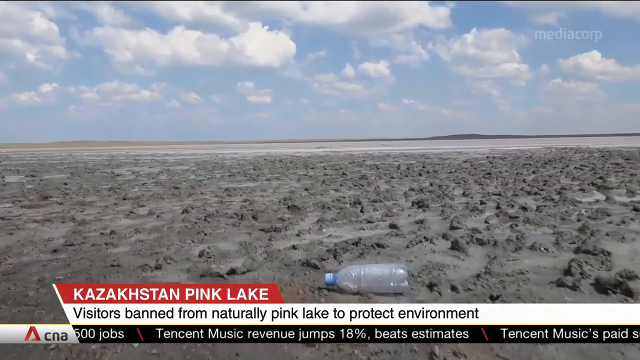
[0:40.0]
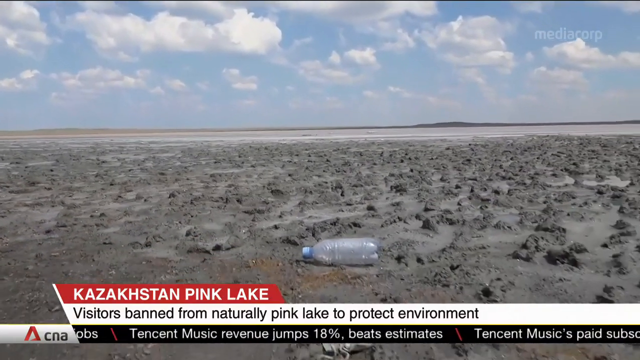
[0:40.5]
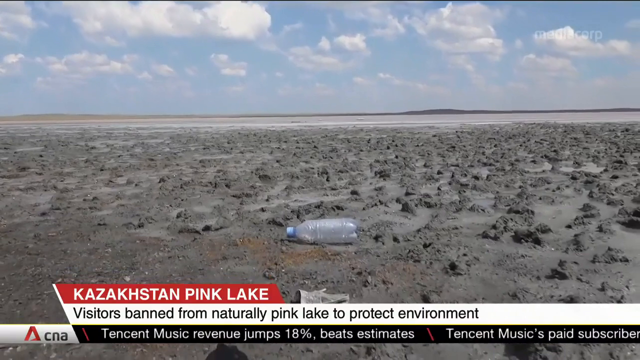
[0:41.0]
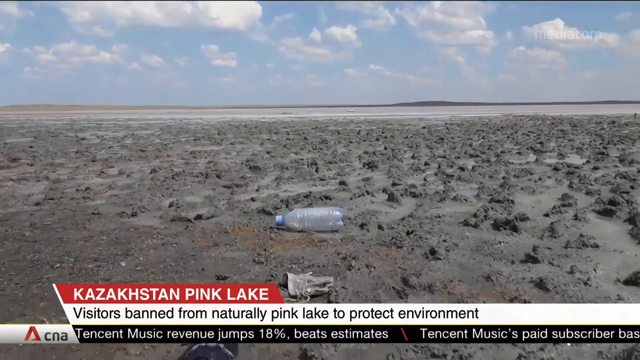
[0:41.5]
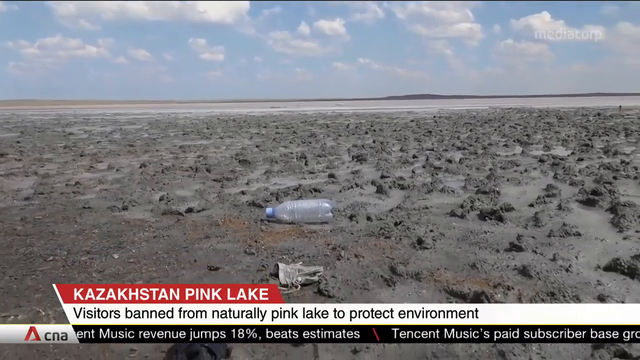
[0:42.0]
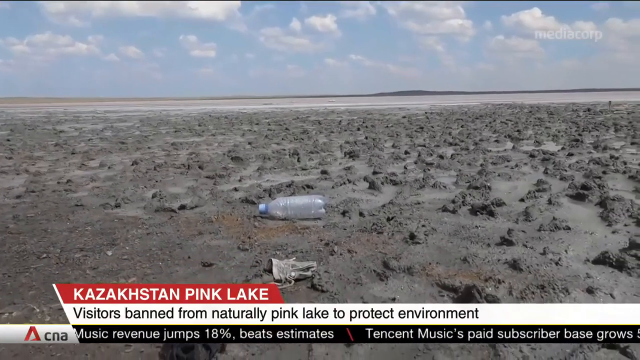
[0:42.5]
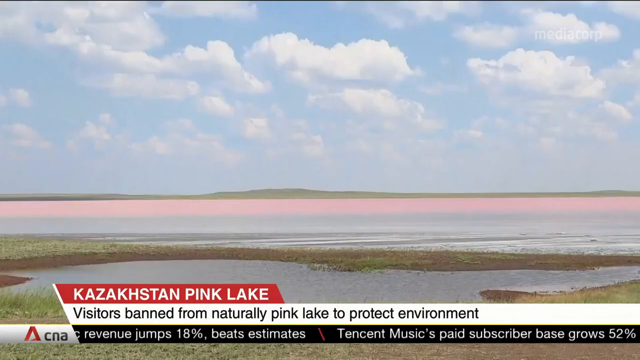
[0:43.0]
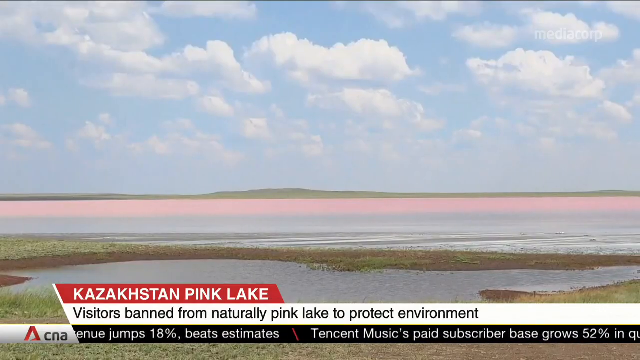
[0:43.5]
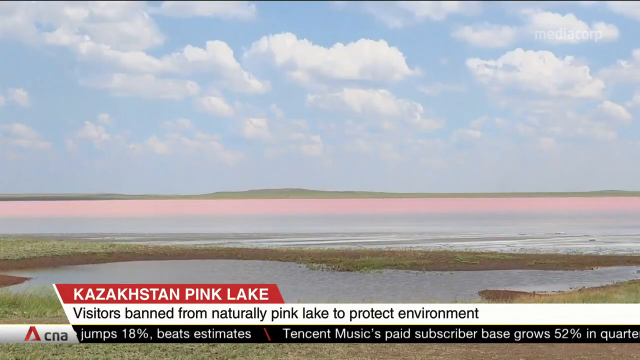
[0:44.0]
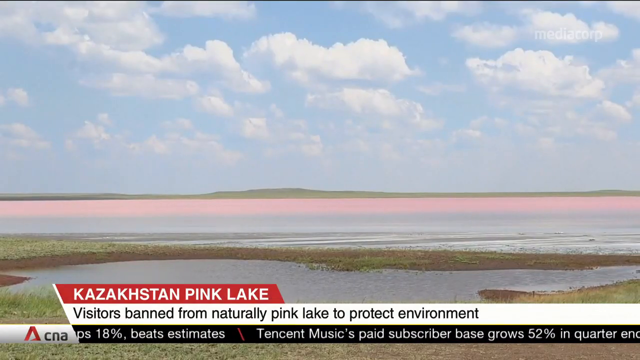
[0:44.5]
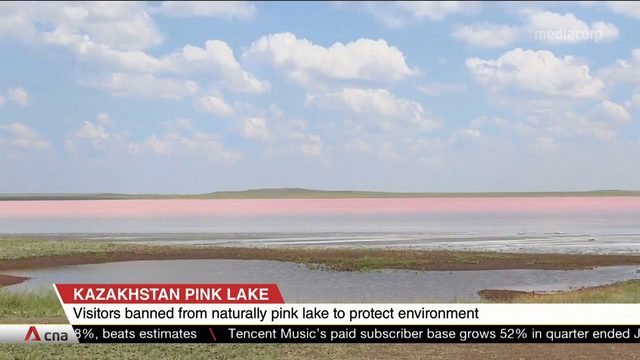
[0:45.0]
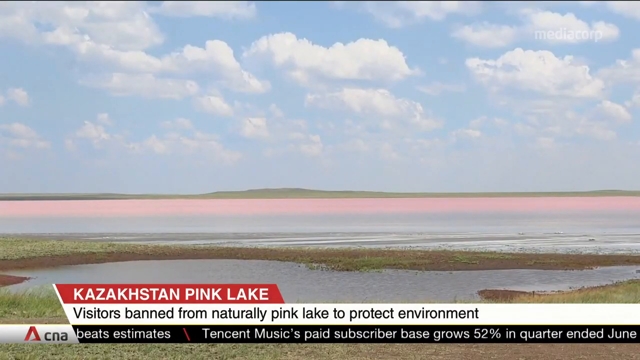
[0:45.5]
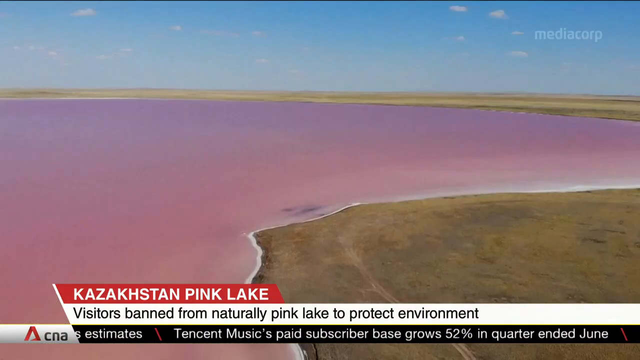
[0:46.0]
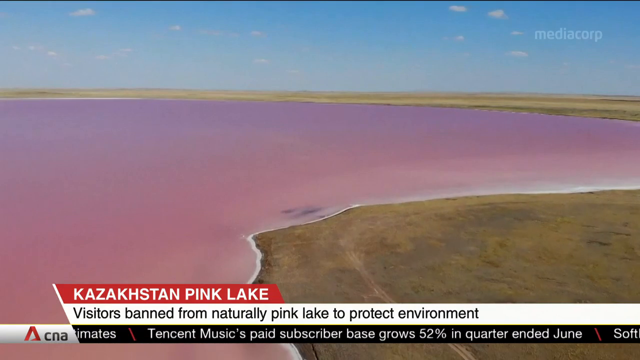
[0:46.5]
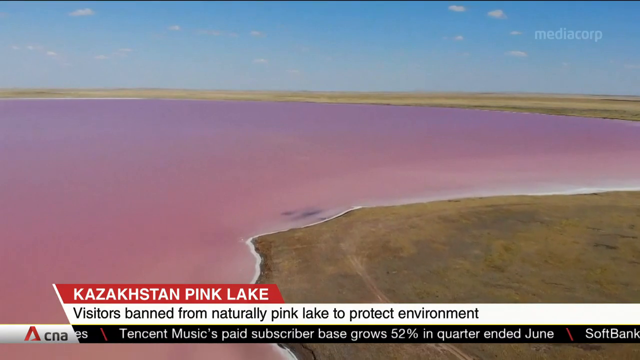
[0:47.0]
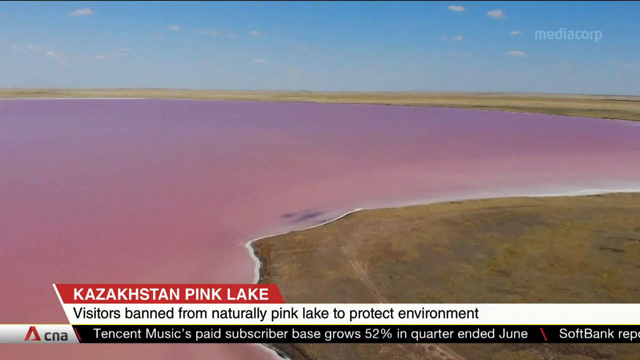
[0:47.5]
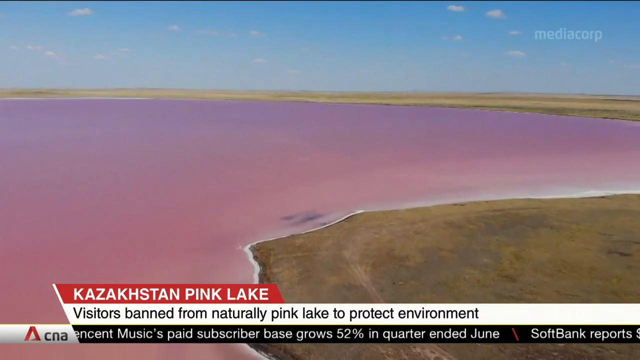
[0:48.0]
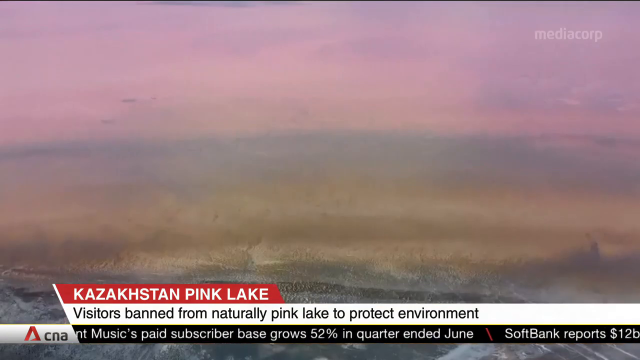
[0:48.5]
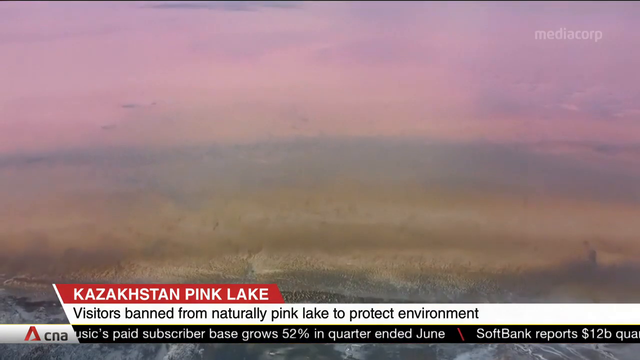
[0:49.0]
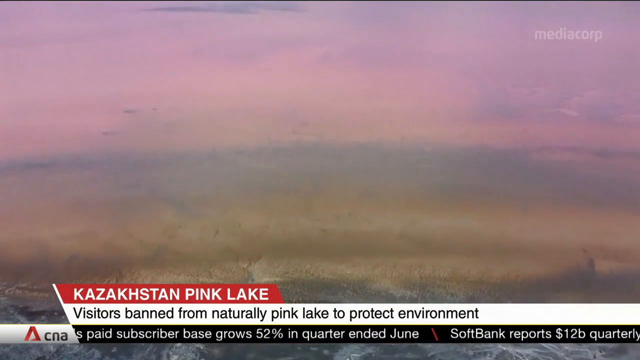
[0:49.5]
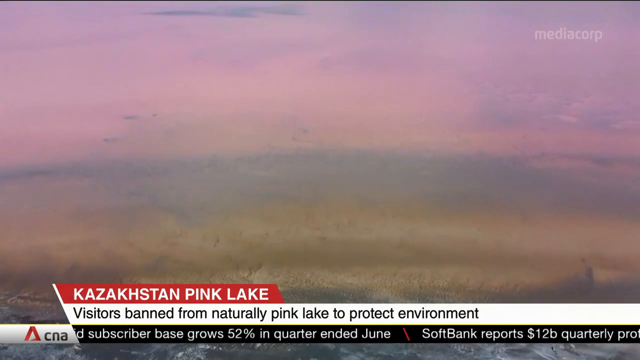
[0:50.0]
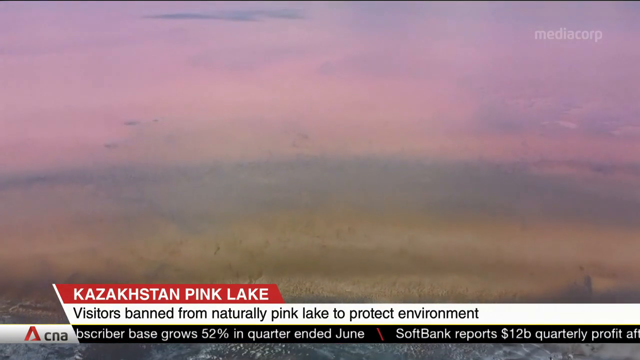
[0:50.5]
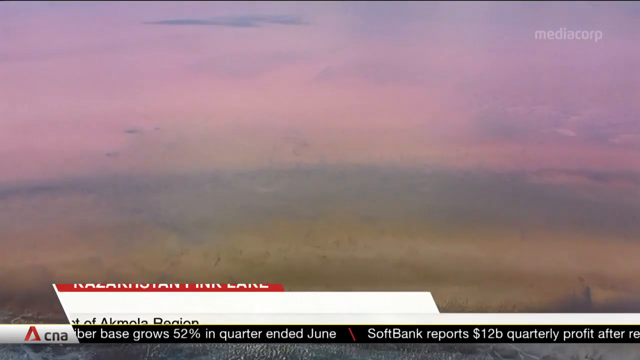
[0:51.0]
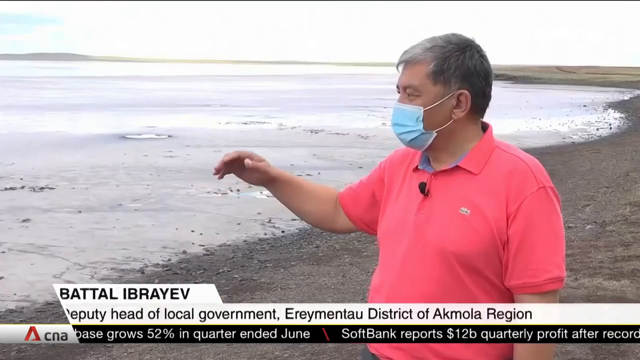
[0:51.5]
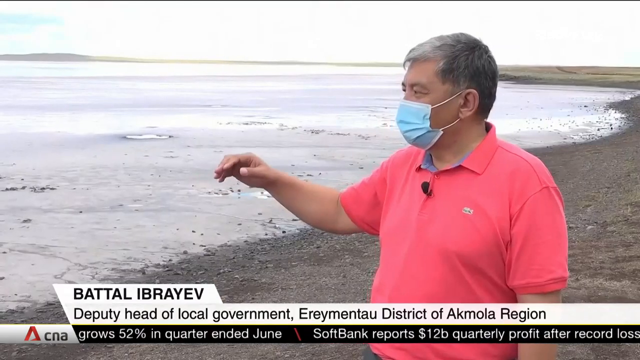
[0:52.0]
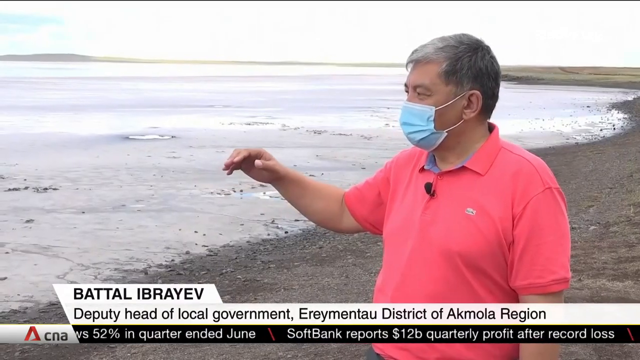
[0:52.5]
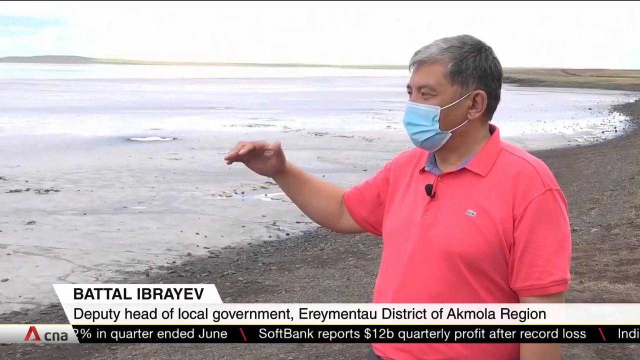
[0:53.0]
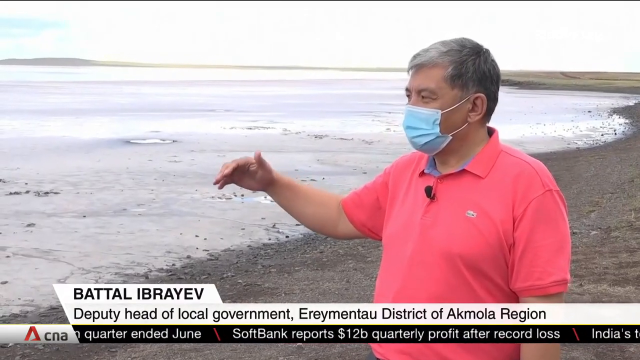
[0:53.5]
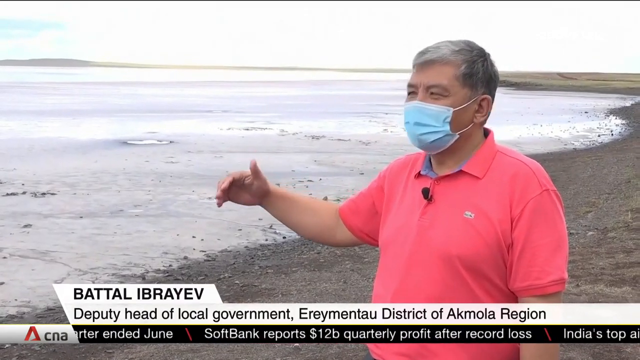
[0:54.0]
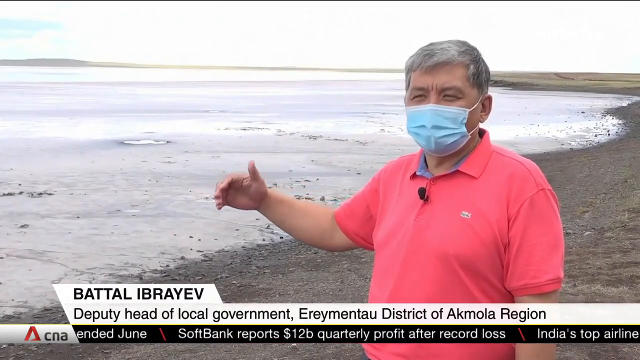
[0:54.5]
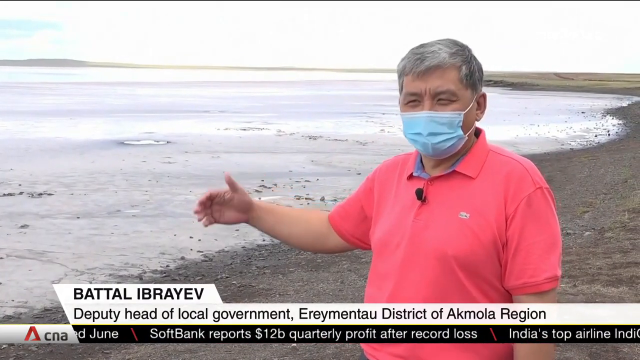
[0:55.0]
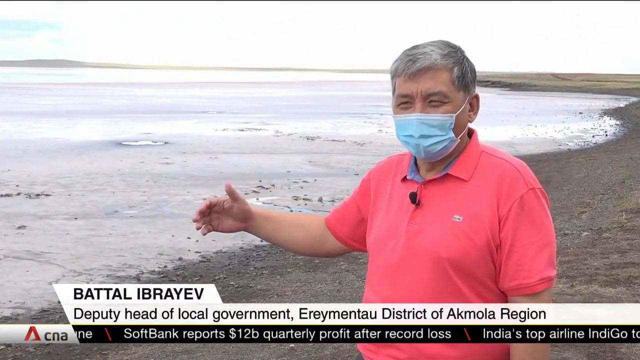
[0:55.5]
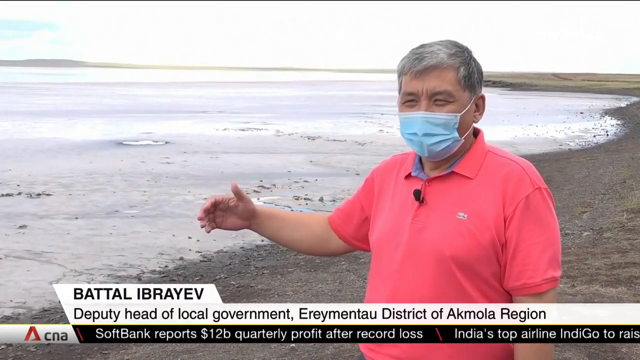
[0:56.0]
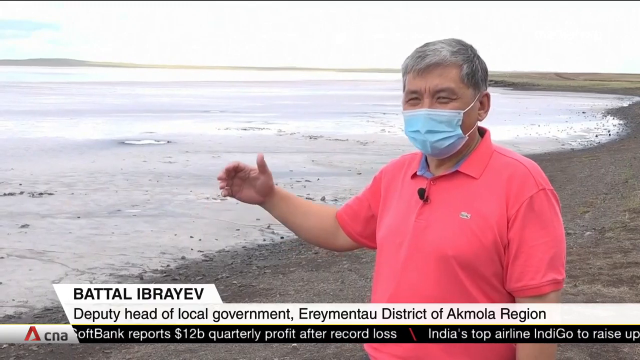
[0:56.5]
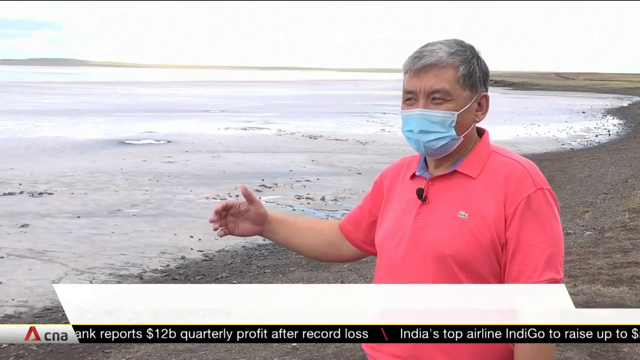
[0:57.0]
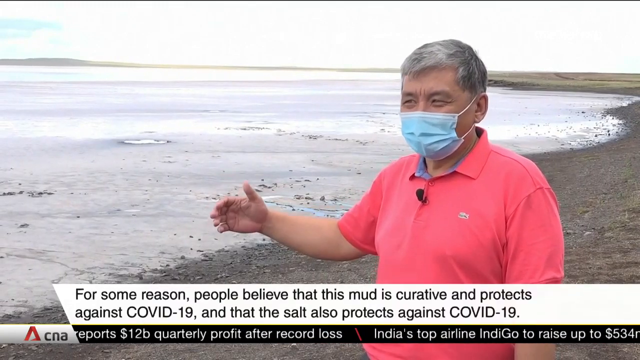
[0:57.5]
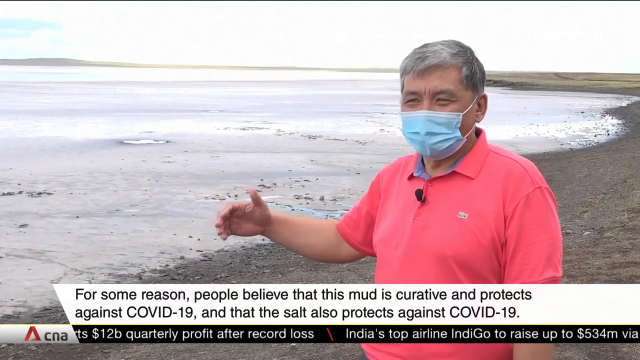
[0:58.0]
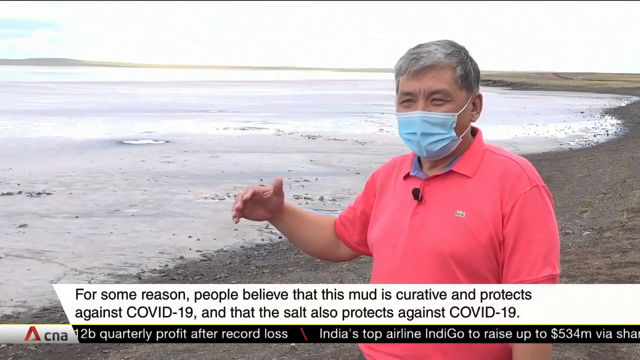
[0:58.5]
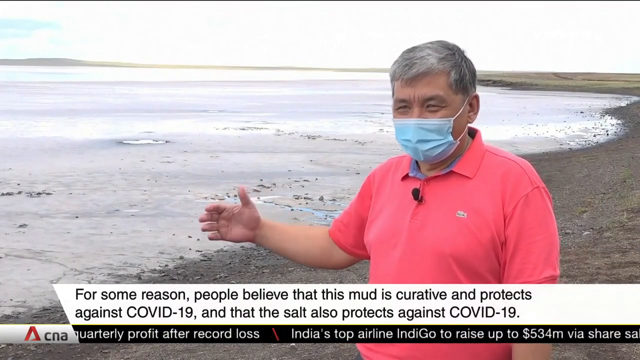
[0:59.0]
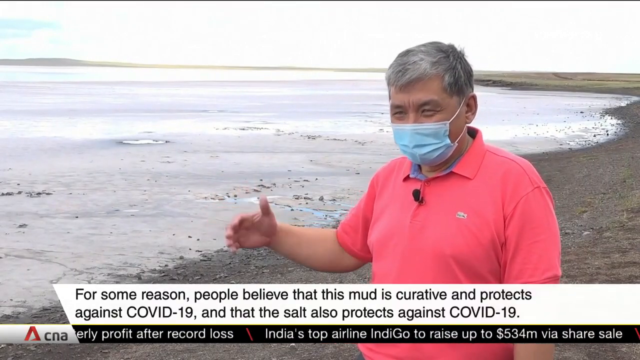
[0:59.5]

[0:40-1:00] An eye-level view shows the dried-up lake bed in part of the lake area, where a weathered plastic water bottle is laying on the dried riverbed; its cap was blue but has been bleached by the sun. The video transitions to an aerial drone view again of the pink-hued water, then to an interview with a man named Batal Ibraev. He wears a pink short-sleeved Izod polo and a blue surgical face mask, and he is standing on the shore of the lake, speaking to the camera. A banner appears along the bottom of the screen identifying him as deputy head of local government, Eremintau district of Acomola region. As he speaks, he looks out at the water and gestures. The video then transitions back to the plastic bottle laying on the dry riverbed. Throughout, the semi-transparent Mediacorp logo is in the top right corner, and the bottom banner stays stationary: "Kazakhstan Pink Lake", "visitors banned from naturally pink lake to protect environment".